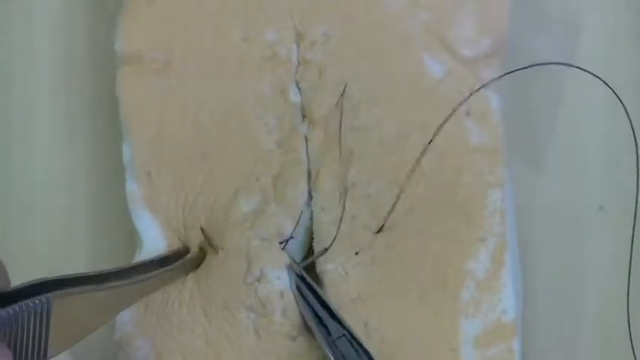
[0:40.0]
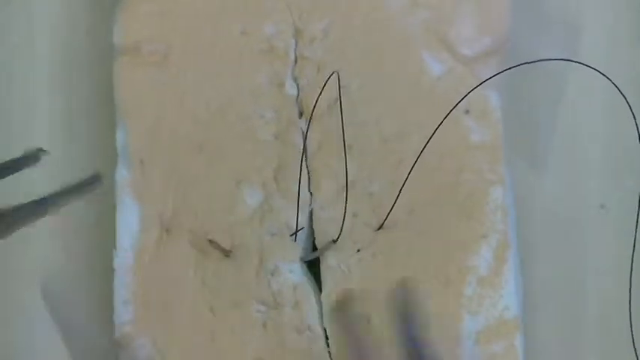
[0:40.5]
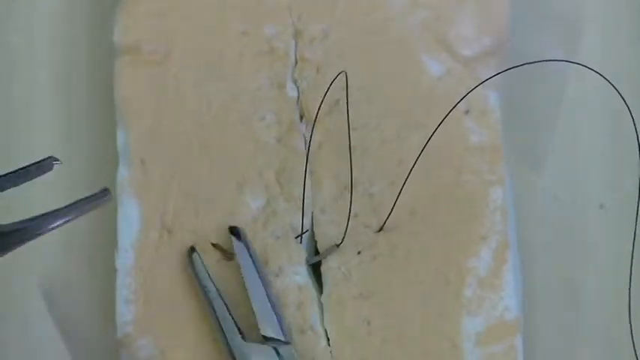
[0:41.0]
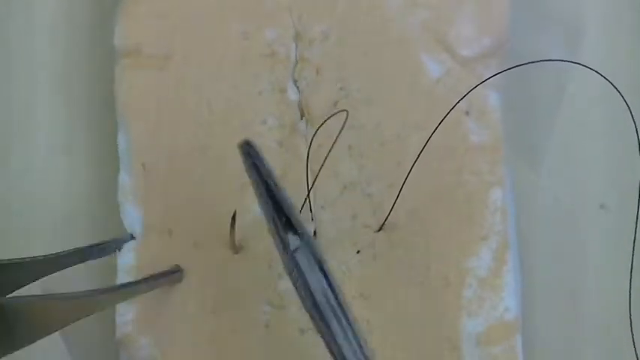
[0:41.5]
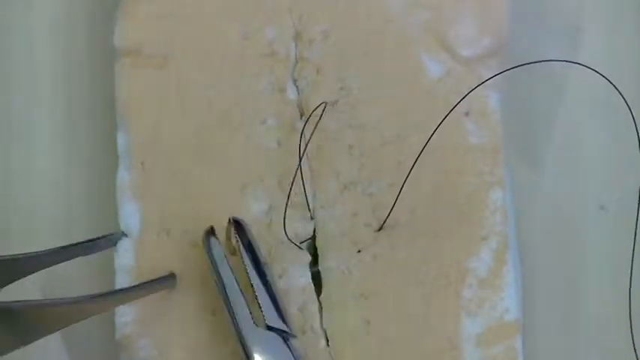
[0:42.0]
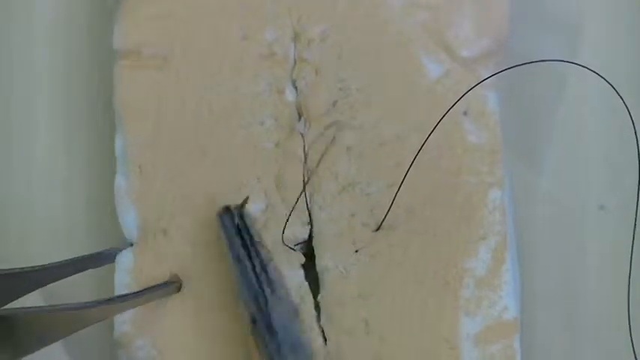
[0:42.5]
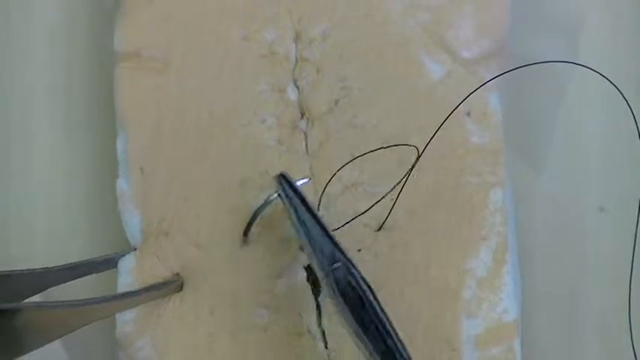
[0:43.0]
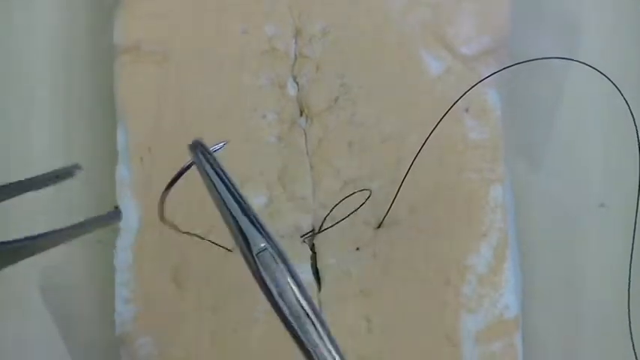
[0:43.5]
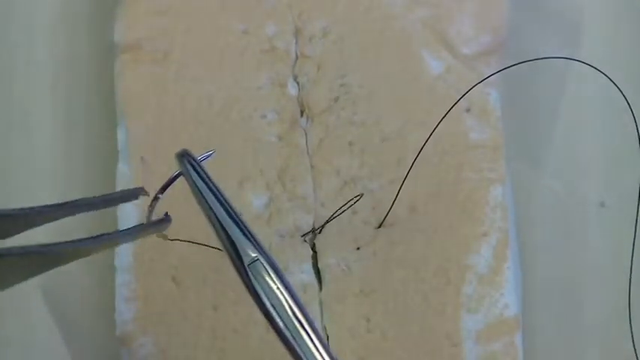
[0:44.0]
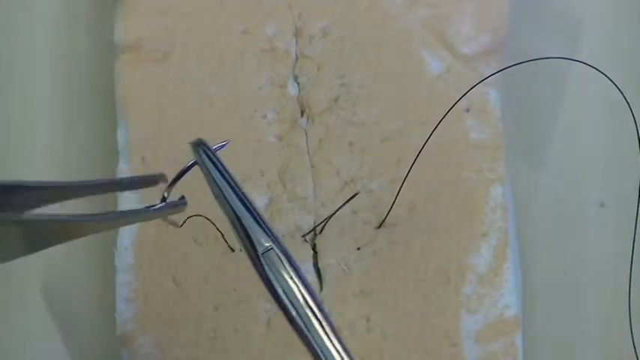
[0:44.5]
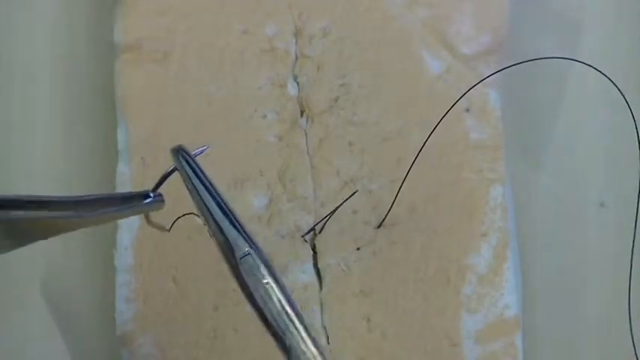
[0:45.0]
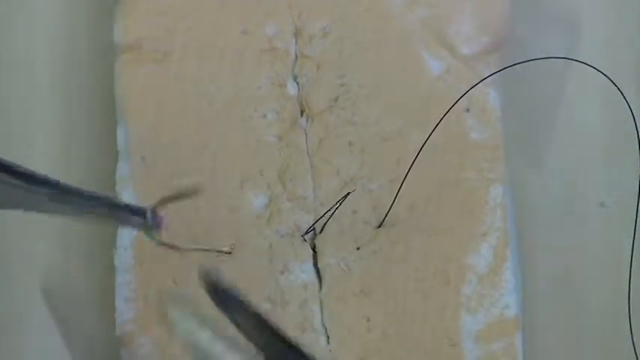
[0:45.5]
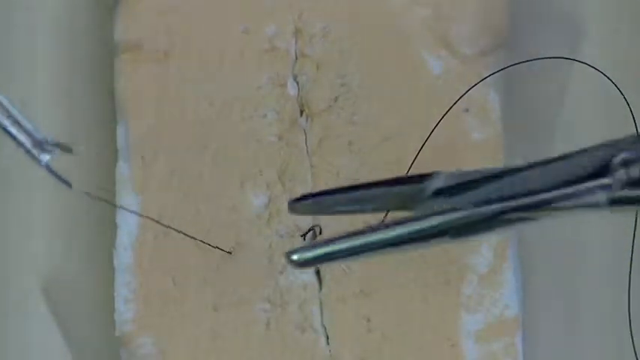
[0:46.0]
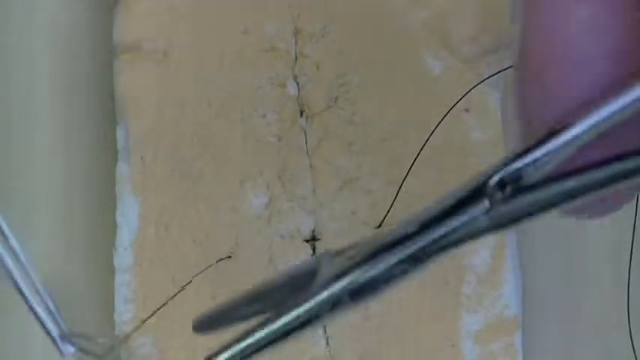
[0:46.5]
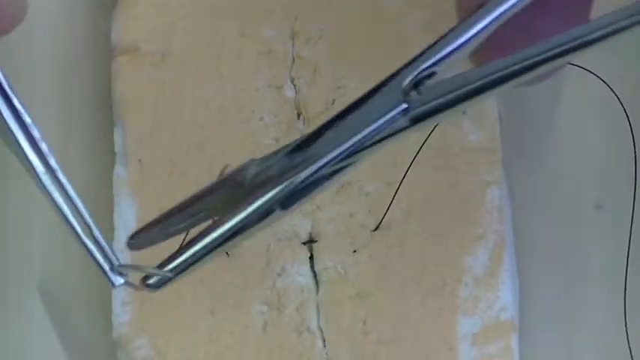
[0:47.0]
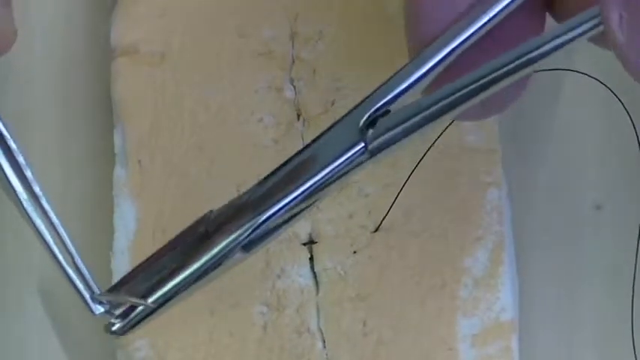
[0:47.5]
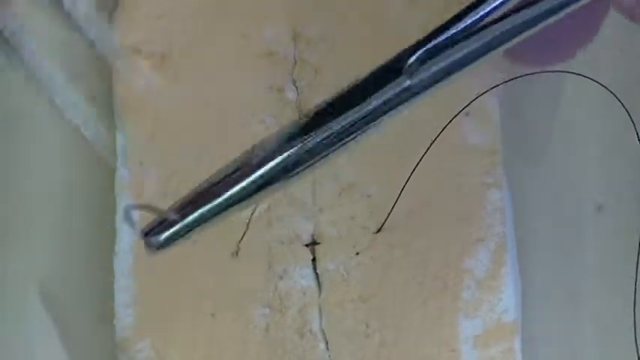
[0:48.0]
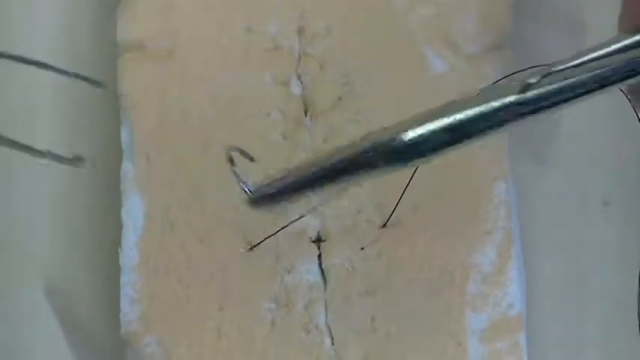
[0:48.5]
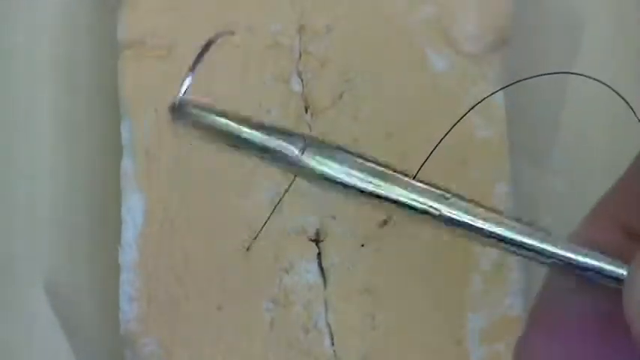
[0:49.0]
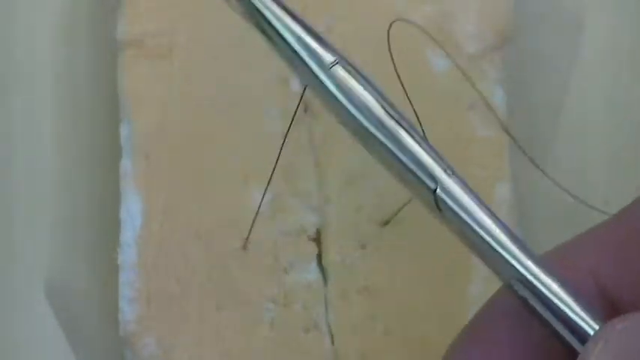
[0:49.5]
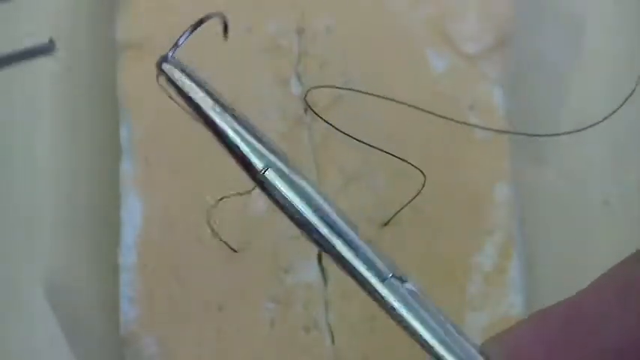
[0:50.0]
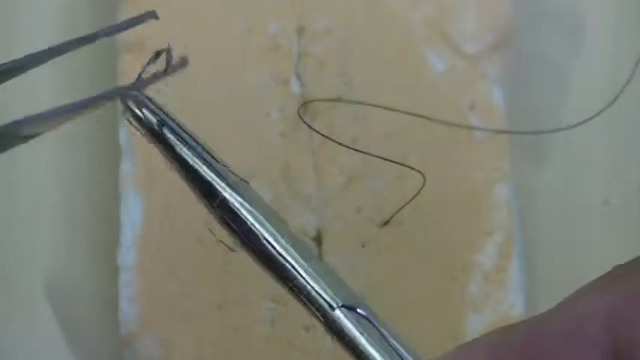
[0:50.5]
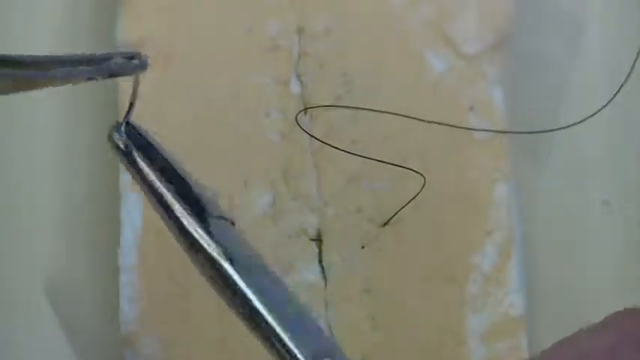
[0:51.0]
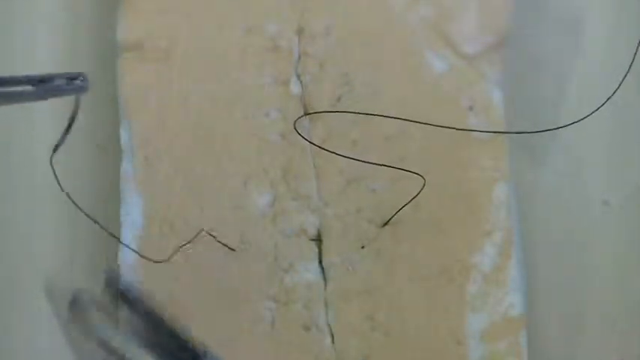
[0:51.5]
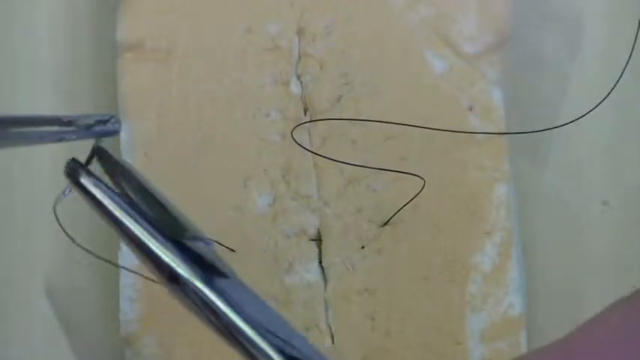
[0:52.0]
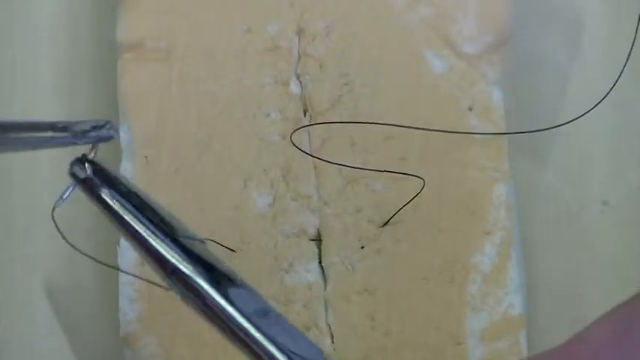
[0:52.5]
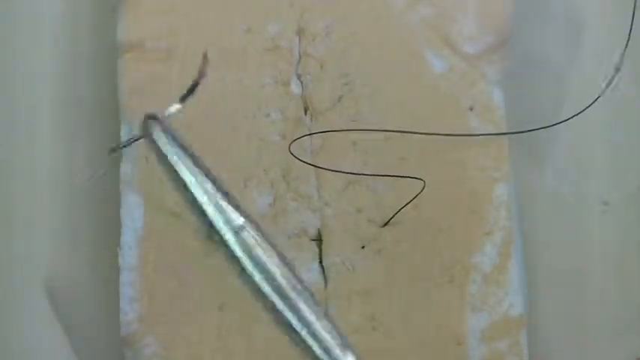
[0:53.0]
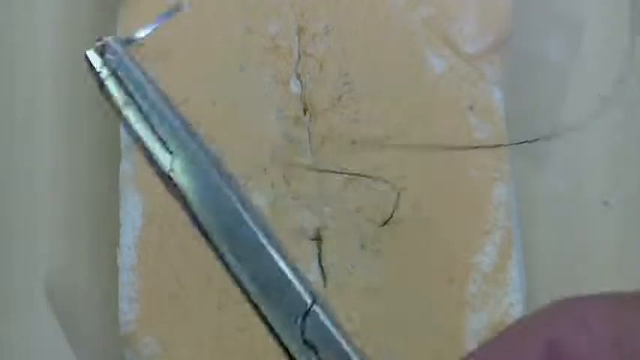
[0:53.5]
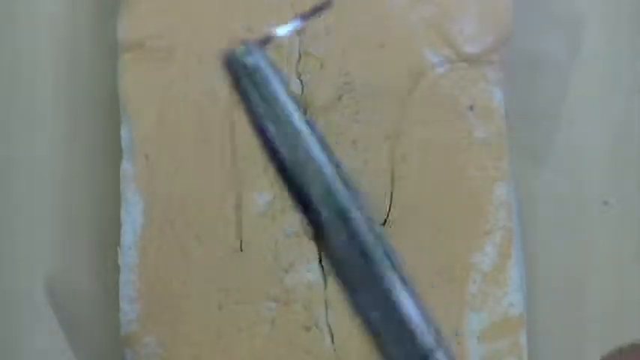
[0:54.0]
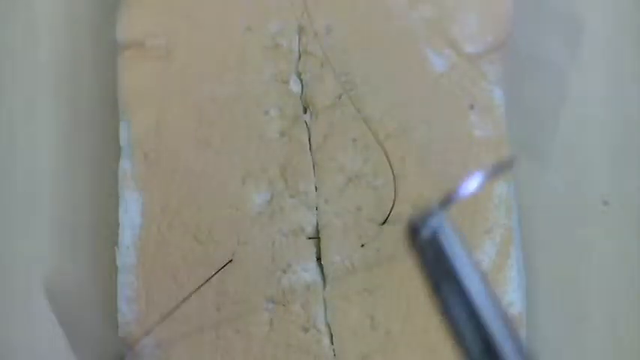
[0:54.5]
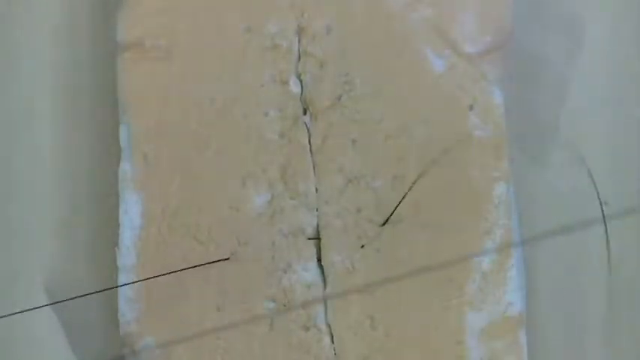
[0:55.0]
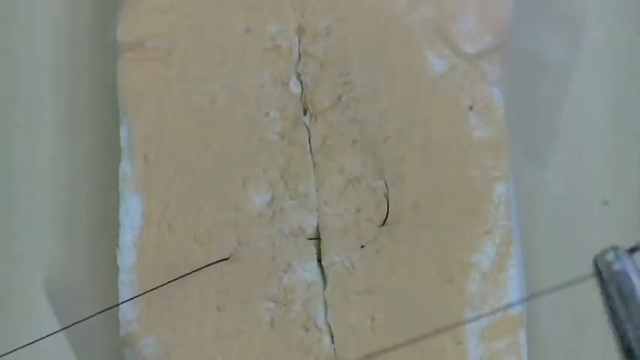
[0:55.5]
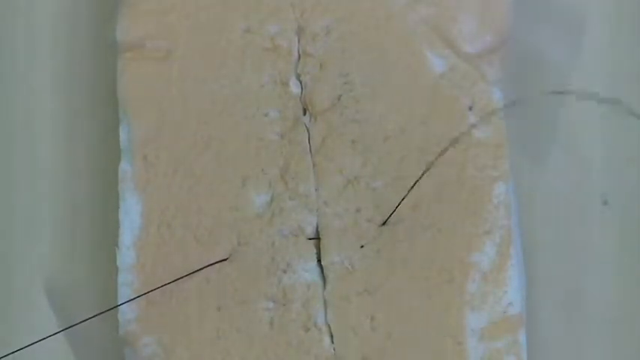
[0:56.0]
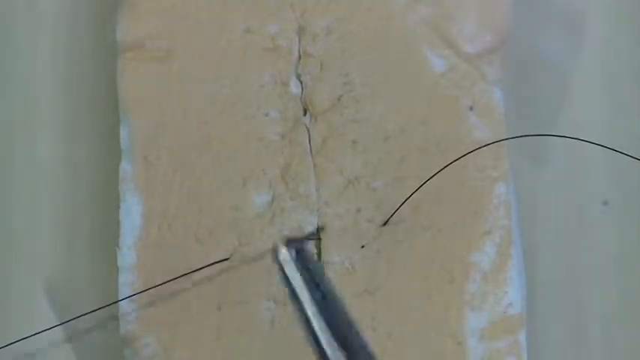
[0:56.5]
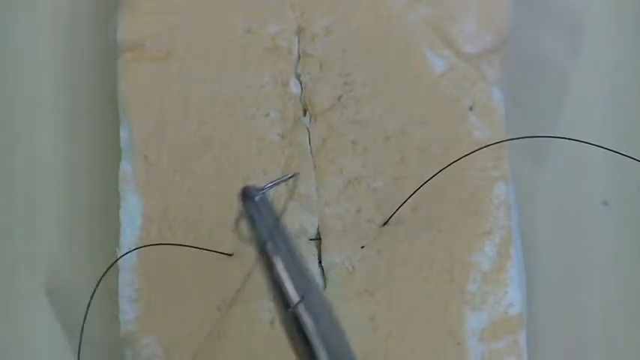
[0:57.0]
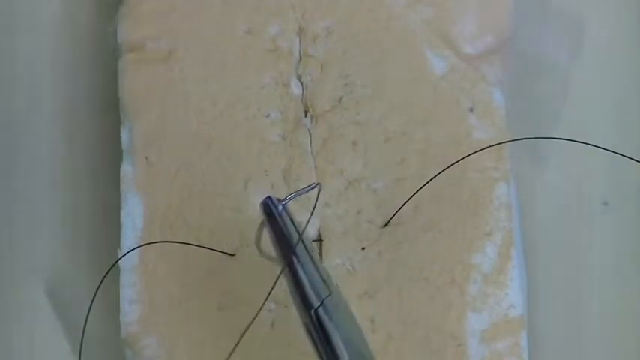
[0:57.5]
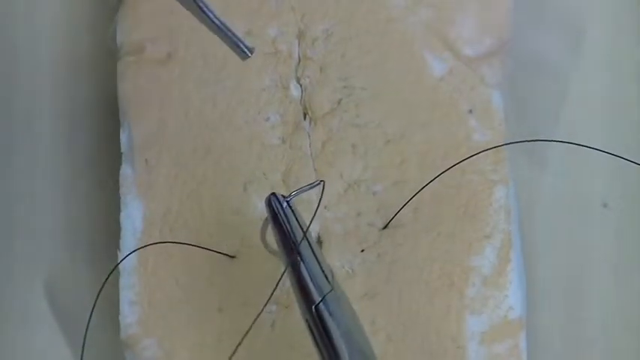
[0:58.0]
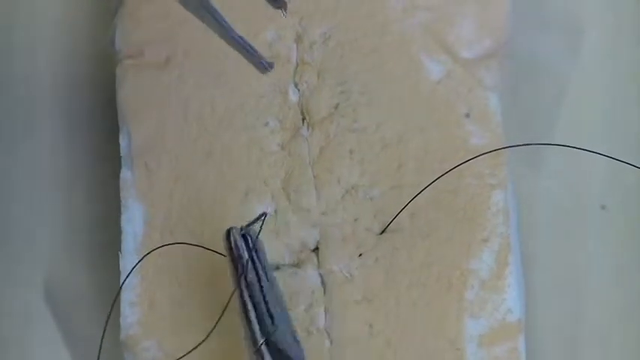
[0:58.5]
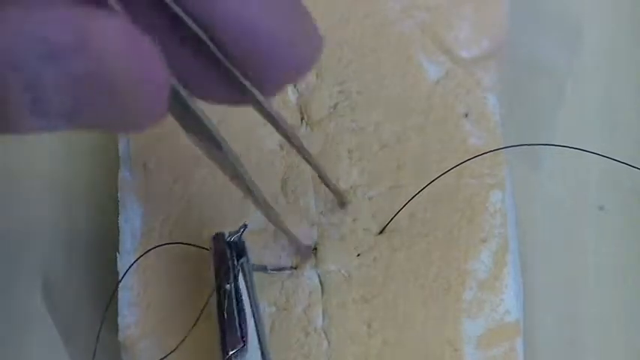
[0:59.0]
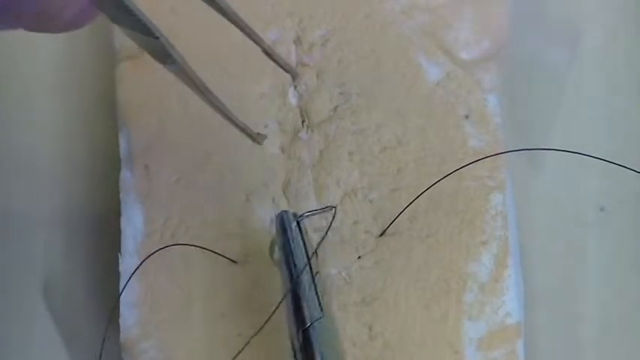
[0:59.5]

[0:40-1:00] The stitching continues. The man uses the needle to pierce one side of the cut and pass the thread through, then pierces the other side and passes the thread through, pulling the whole thread through to create an interlocking pattern. He does this with the help of the two pairs of forceps rather than his bare hands. The object possibly represents a human body in need of stitches.